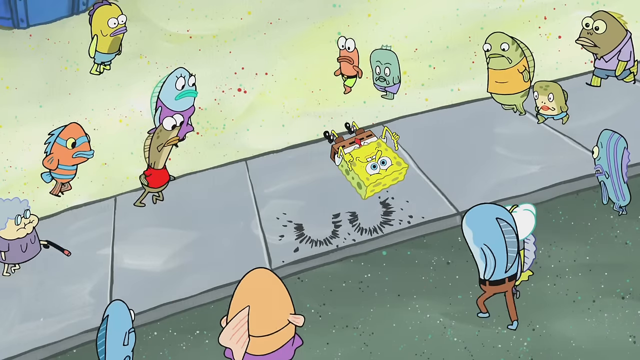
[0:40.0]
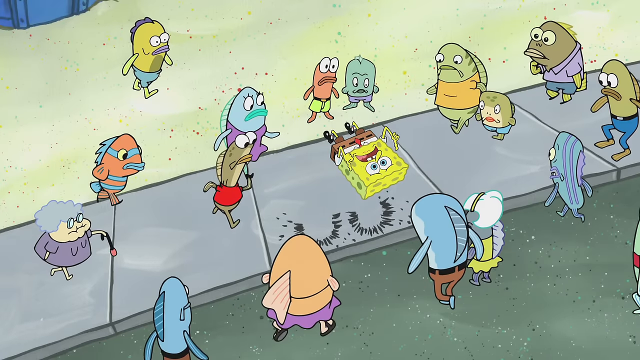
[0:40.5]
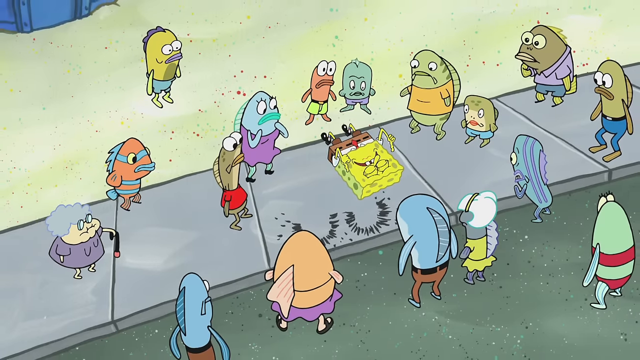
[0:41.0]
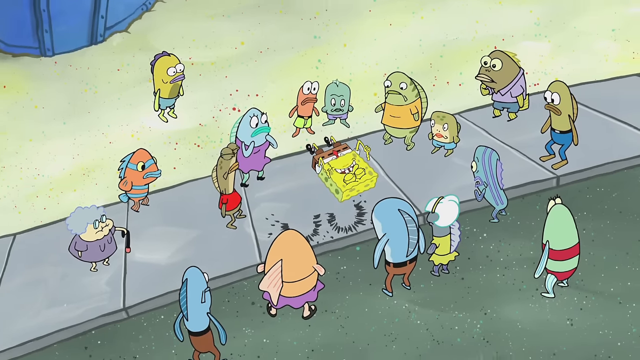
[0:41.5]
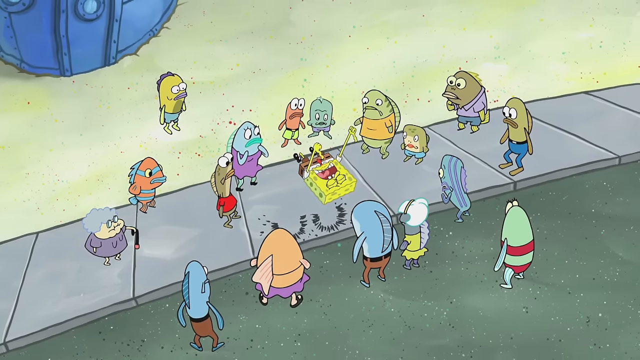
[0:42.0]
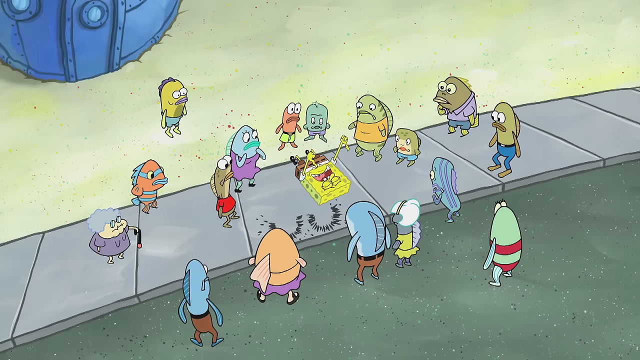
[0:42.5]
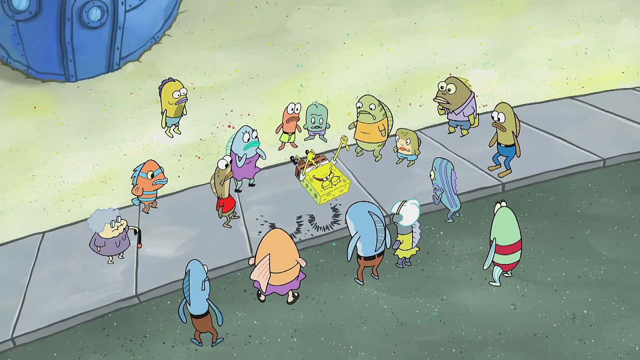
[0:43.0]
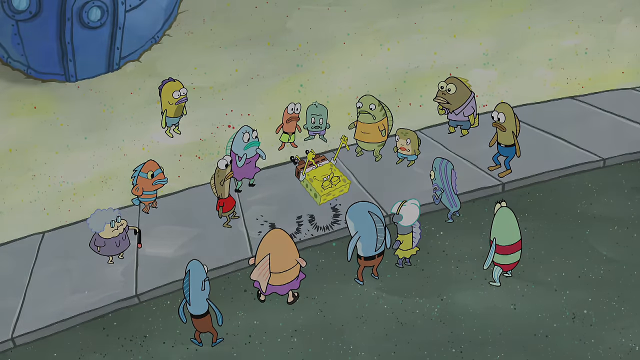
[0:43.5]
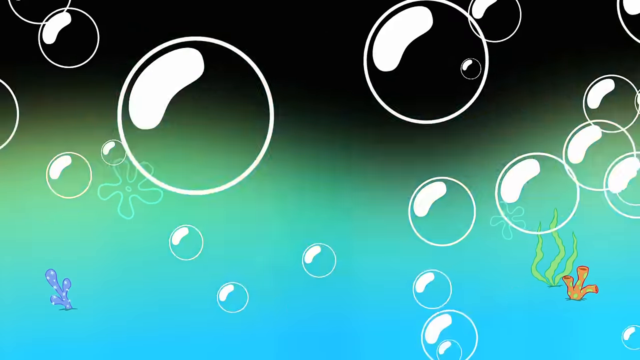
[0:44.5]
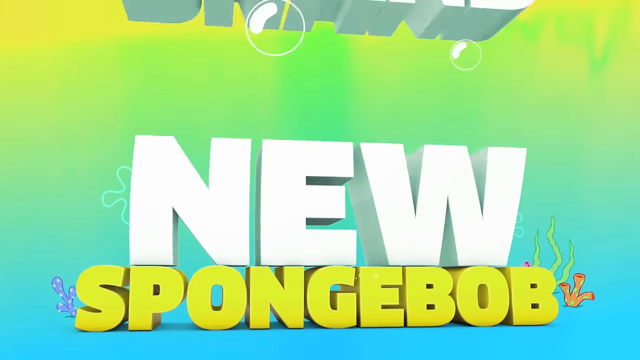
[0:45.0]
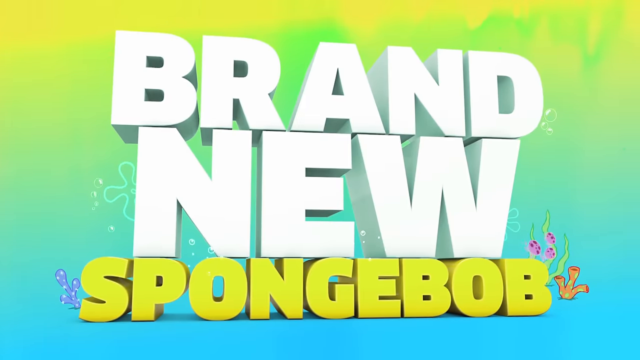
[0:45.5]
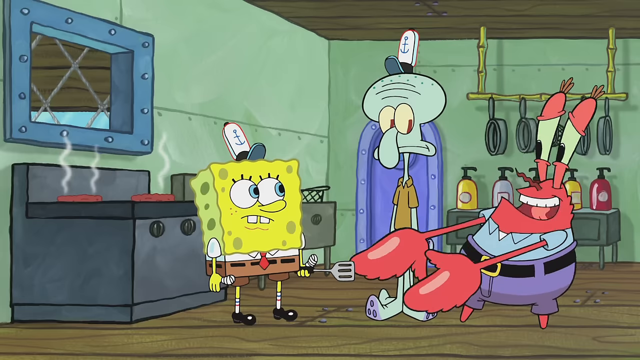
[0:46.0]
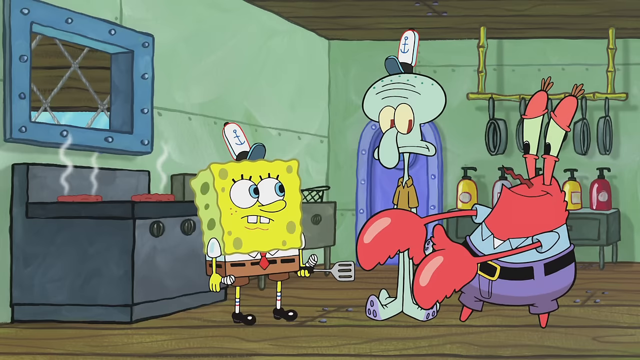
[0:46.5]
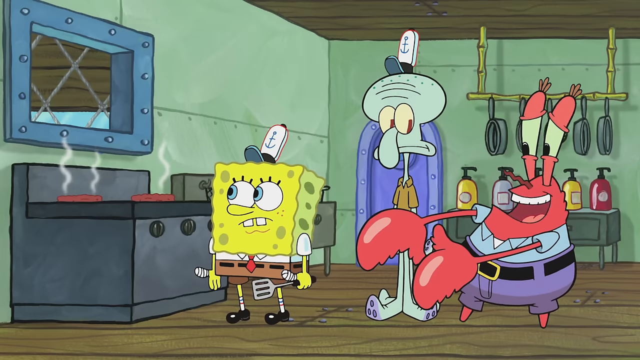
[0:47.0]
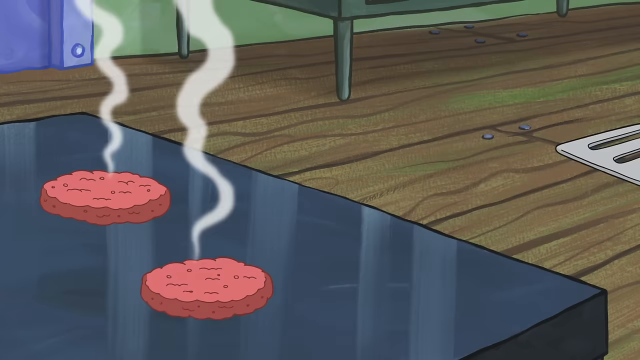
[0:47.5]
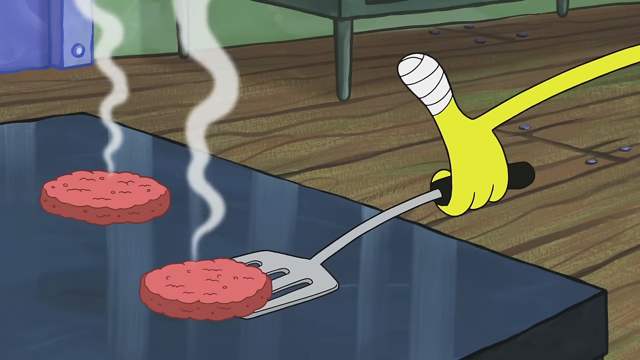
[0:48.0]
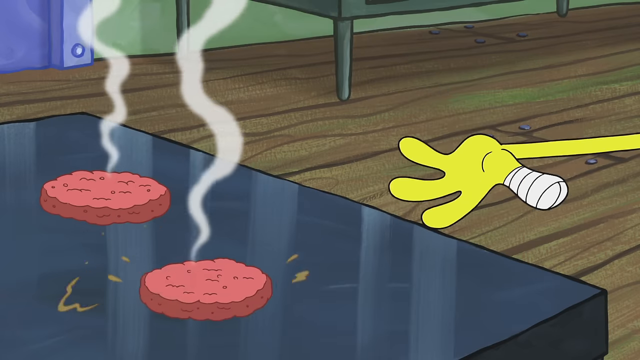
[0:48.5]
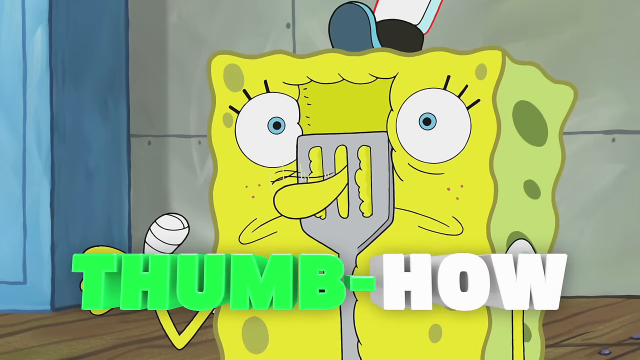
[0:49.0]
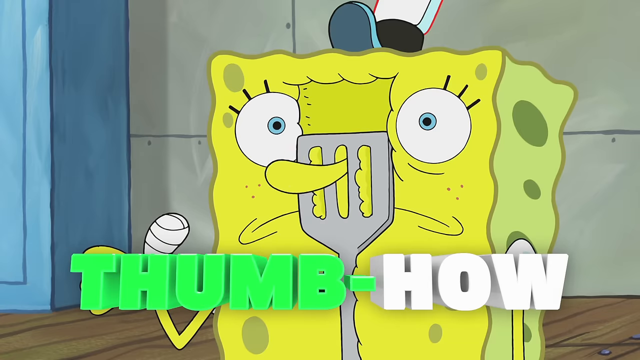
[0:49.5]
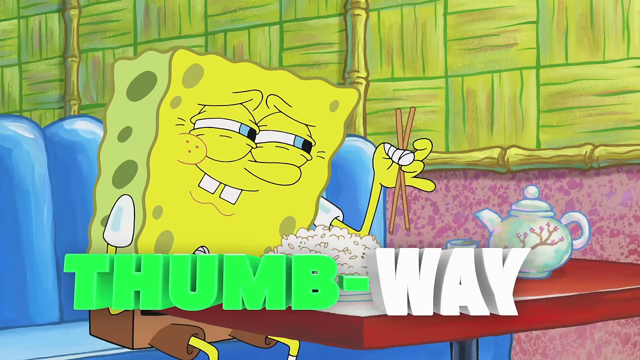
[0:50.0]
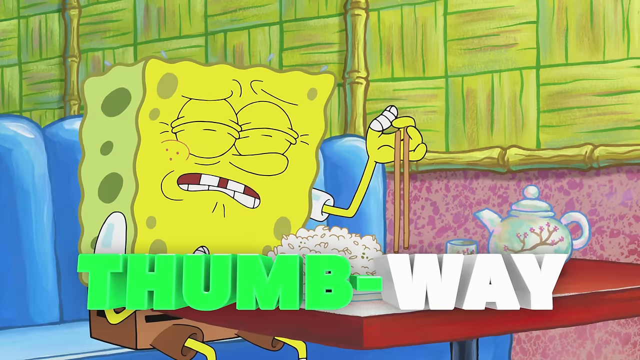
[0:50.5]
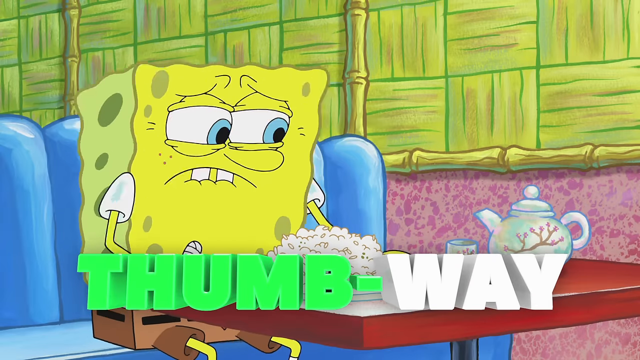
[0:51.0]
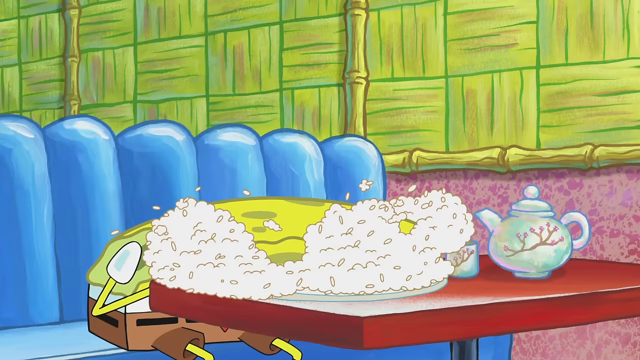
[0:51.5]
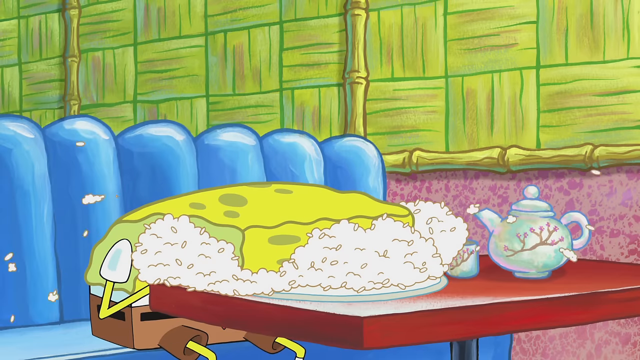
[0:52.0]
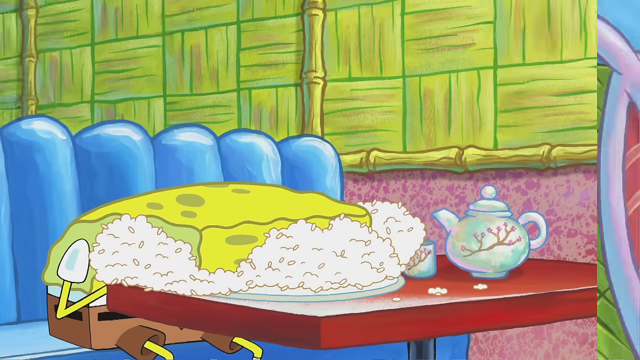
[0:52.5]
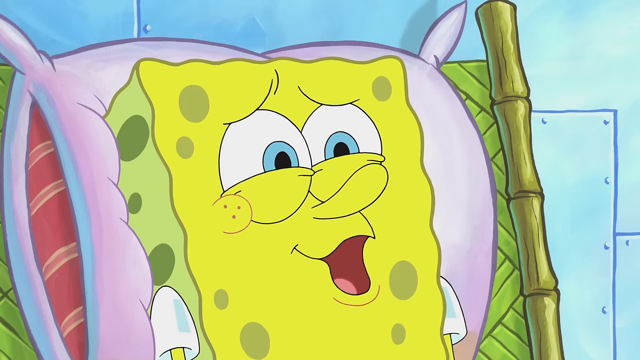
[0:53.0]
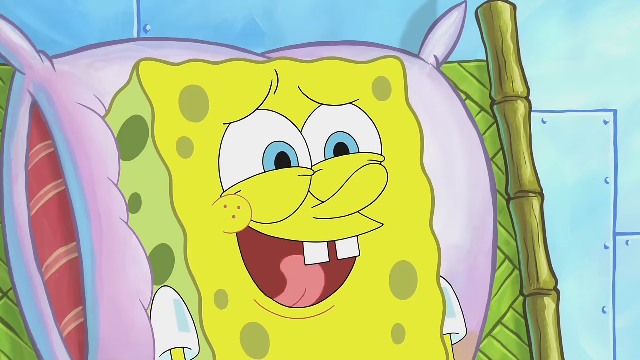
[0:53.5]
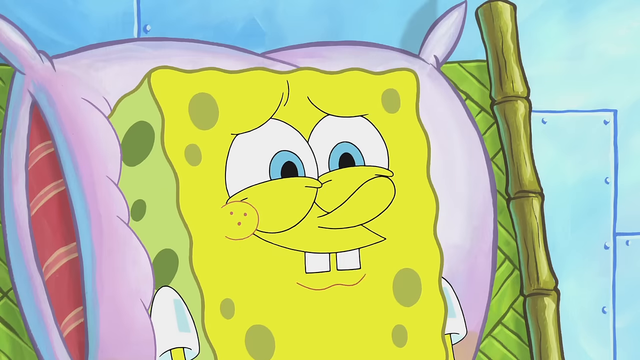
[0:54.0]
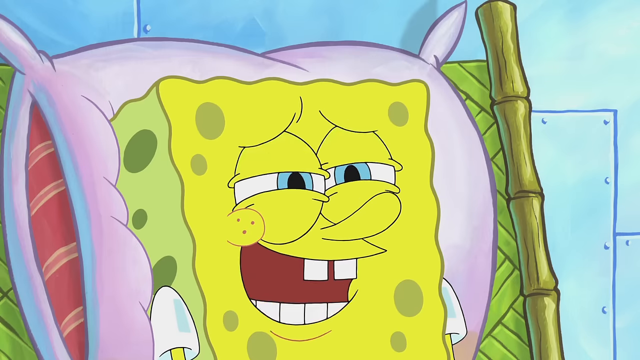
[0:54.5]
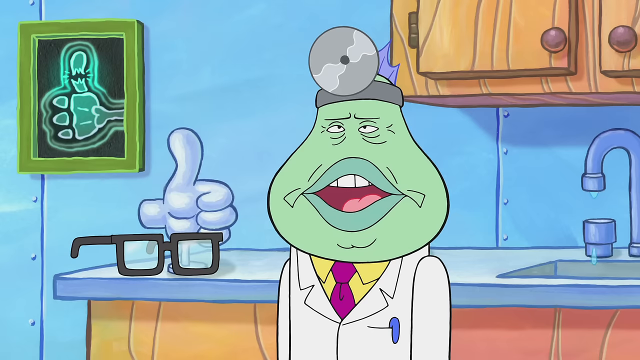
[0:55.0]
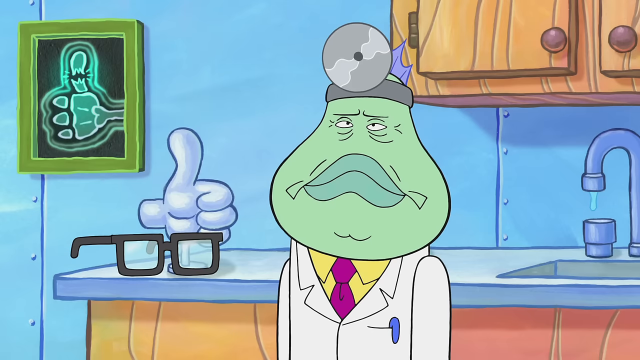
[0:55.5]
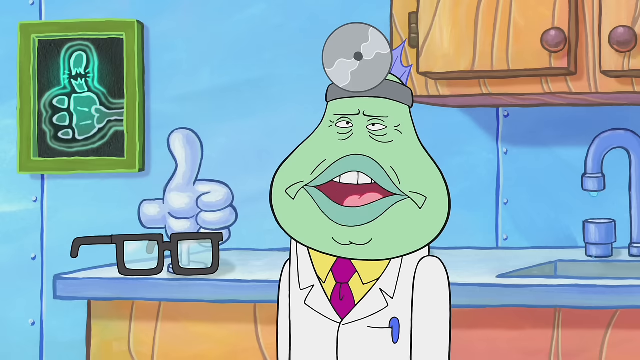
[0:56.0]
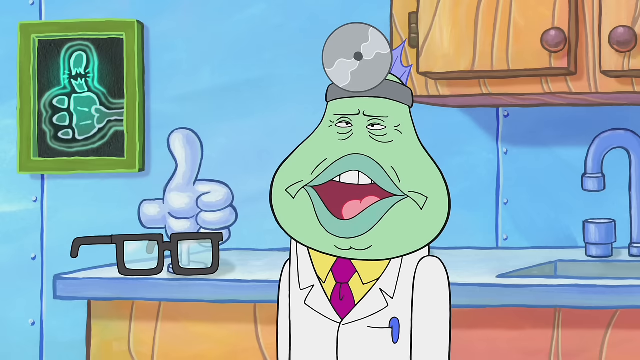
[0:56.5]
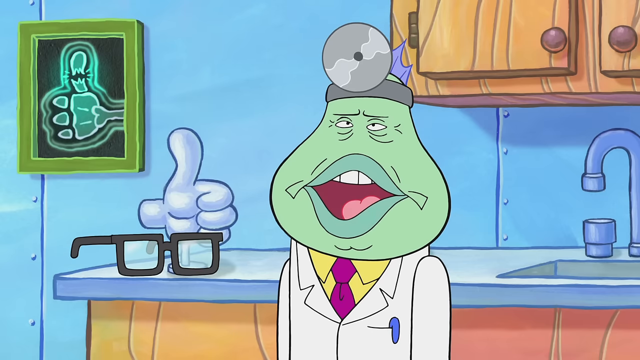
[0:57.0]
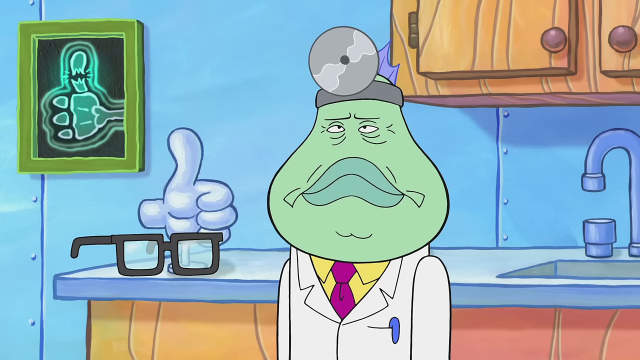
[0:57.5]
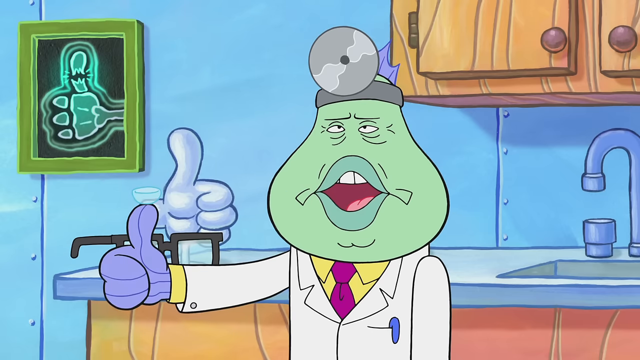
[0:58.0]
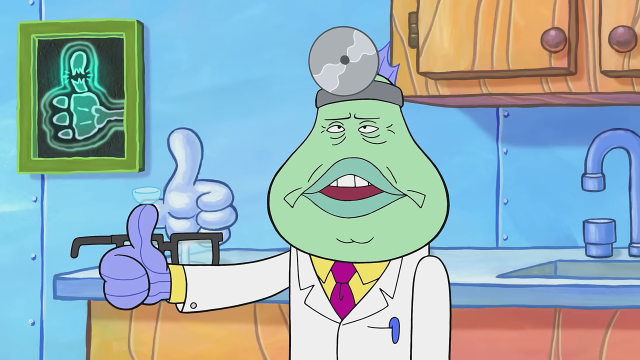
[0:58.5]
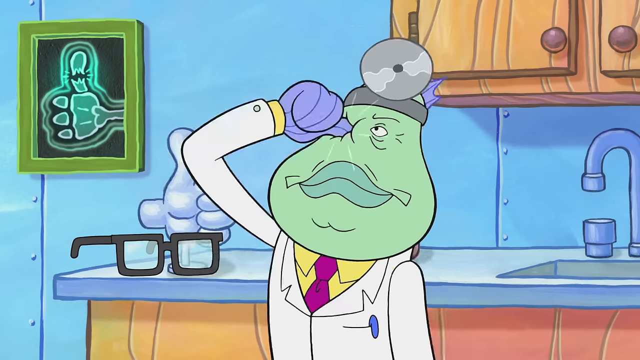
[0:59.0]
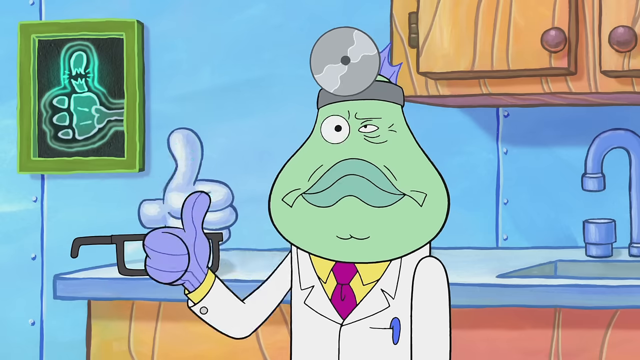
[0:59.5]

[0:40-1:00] SpongeBob is on the ground with two scorch marks nearby to his right. A crowd gathers around him as he begins to talk. The camera zooms out as SpongeBob laughs, holding his hands in the air, still making a thumbs-up gesture. A series of bubbles rises into the air as a transition, and then block squares of letters drop to form the phrase "brand new Spongebob", with "brand new" in white and "Spongebob" in yellow. In the Krusty Krab kitchen, Mr. Krabs talks to SpongeBob with Squidward nearby. SpongeBob tries to flip a patty on the grill, loses control of the spatula, and it hits his face. Next, SpongeBob tries and fails to eat food with chopsticks while the tag "thumb way" appears at the bottom of the screen, "thumb" in green and "way" in white; he then plows his face into the food. SpongeBob then lies on a pillow in a doctor's room, talking to a green doctor wearing a white lab coat over a yellow shirt with a pink tie. The doctor gives SpongeBob a thumbs up and then points it into his eye.